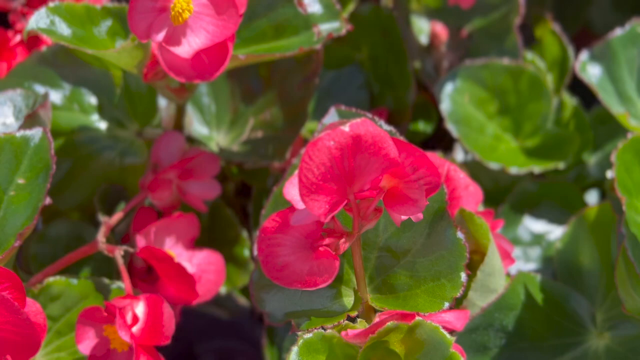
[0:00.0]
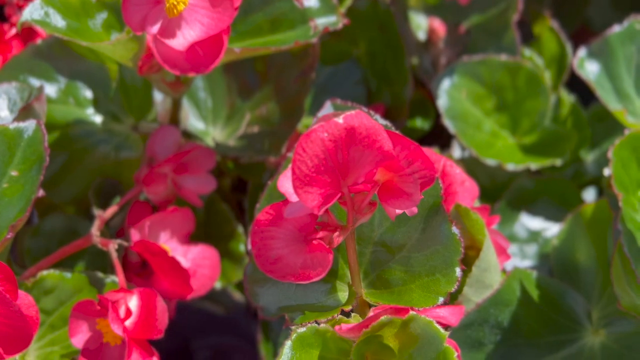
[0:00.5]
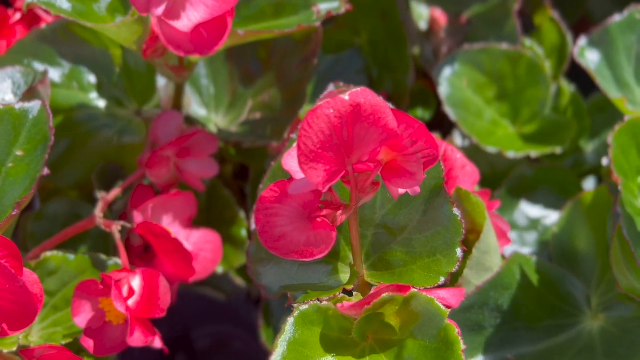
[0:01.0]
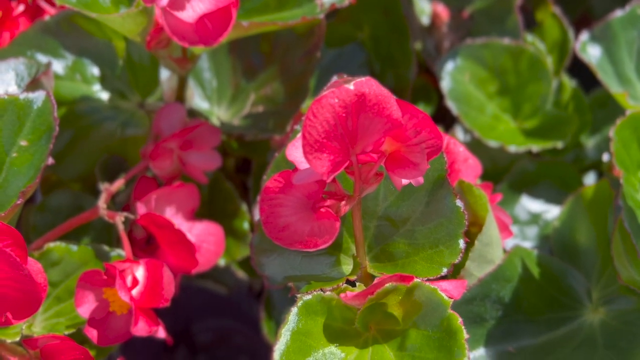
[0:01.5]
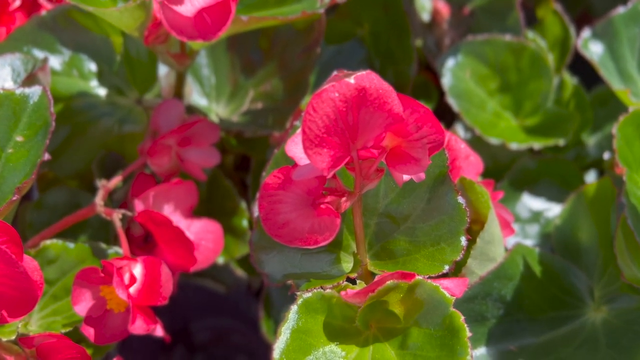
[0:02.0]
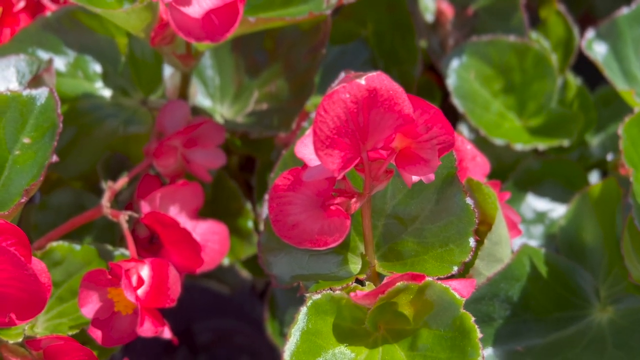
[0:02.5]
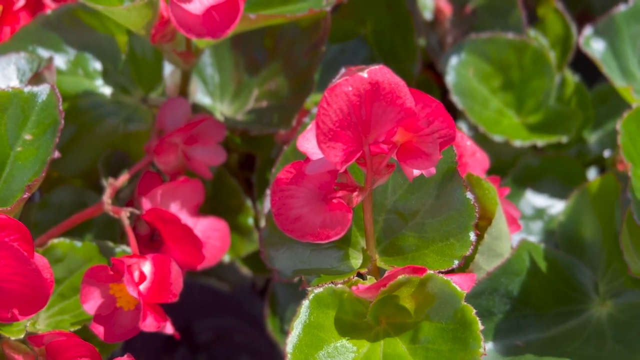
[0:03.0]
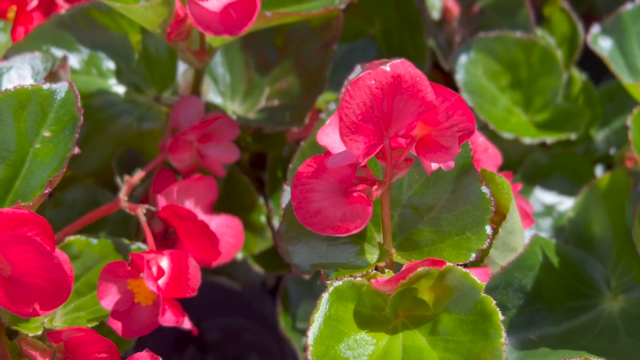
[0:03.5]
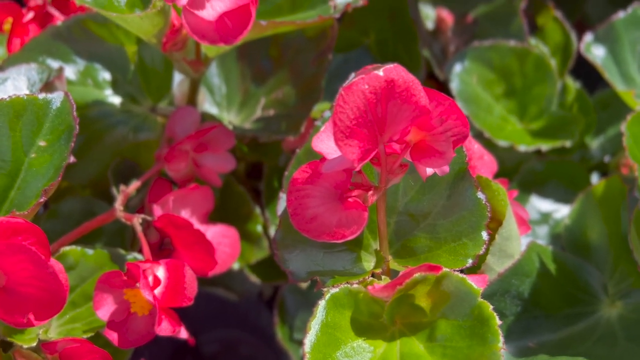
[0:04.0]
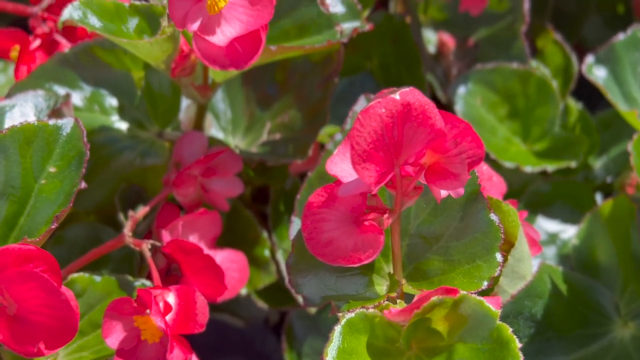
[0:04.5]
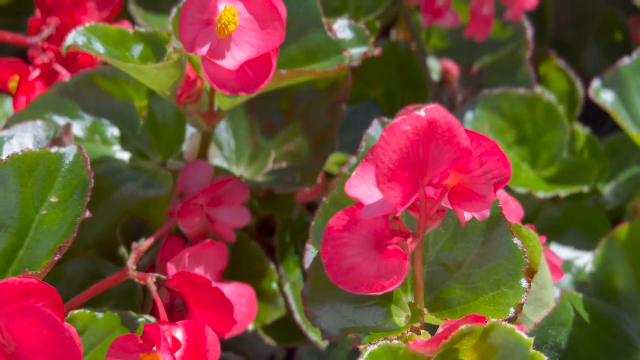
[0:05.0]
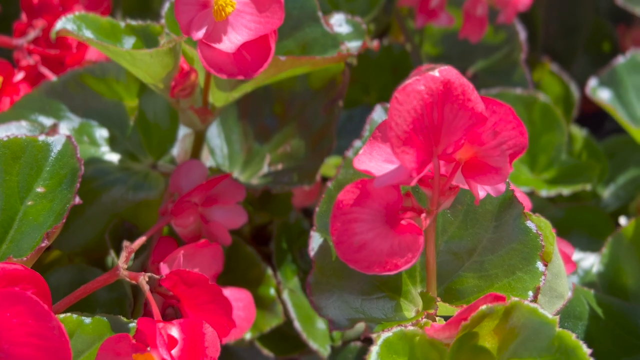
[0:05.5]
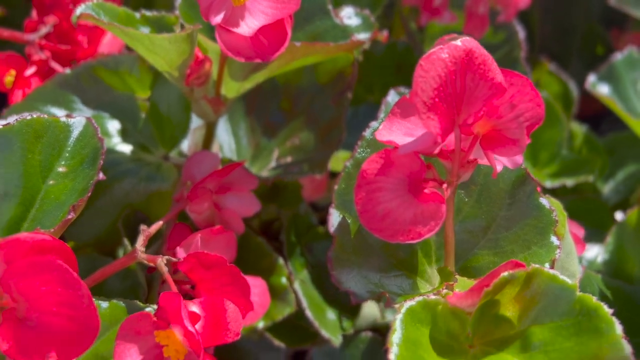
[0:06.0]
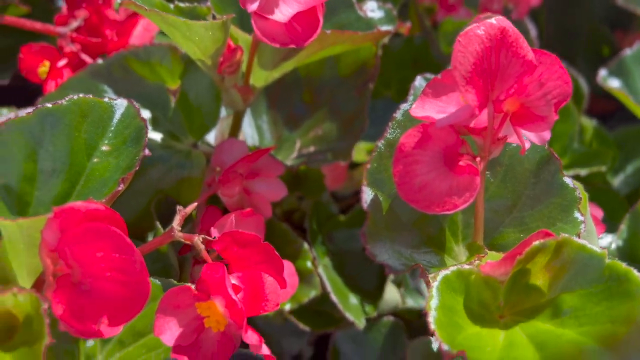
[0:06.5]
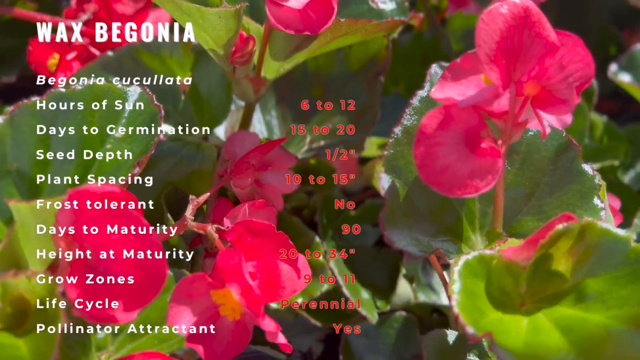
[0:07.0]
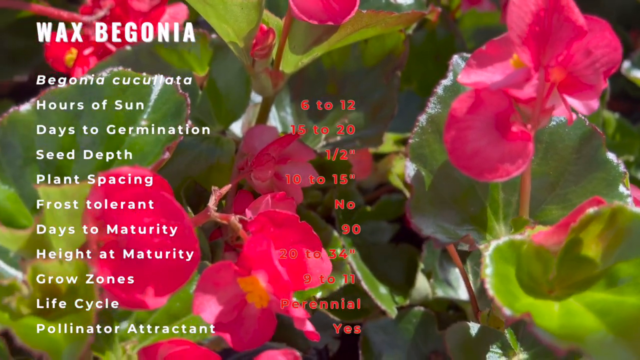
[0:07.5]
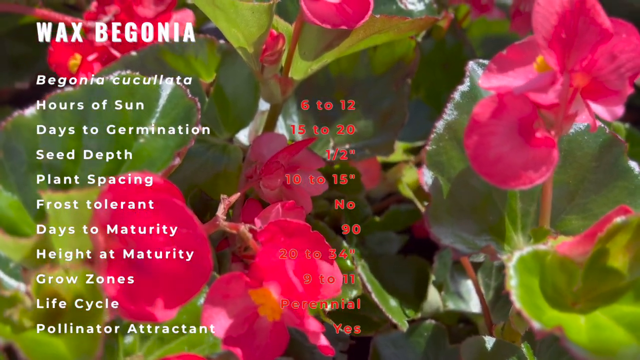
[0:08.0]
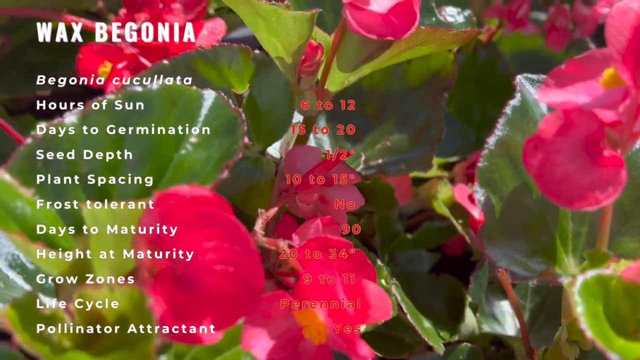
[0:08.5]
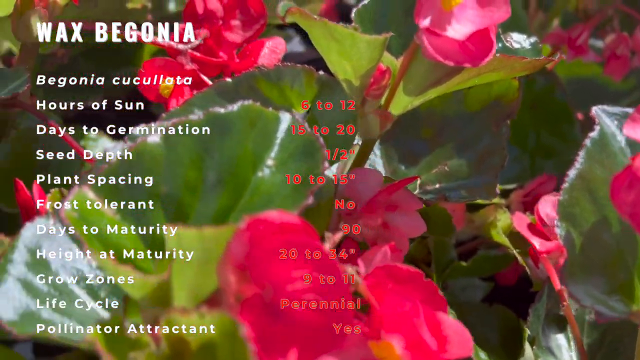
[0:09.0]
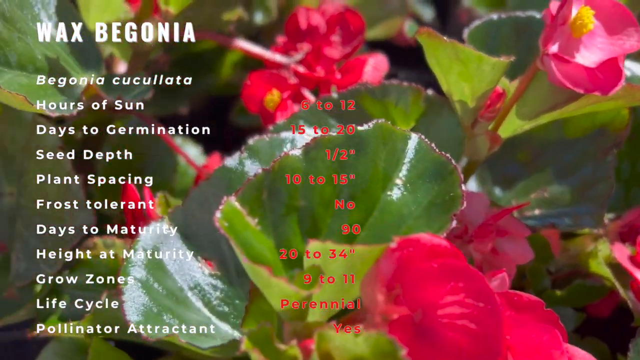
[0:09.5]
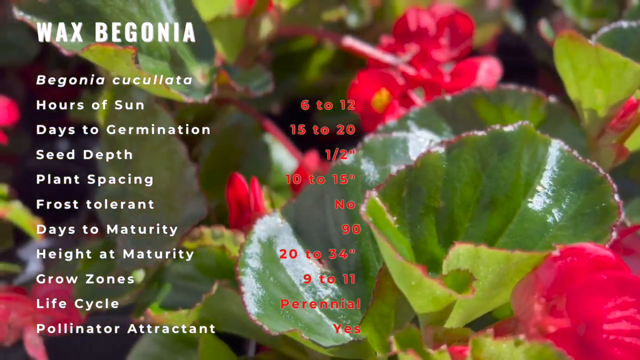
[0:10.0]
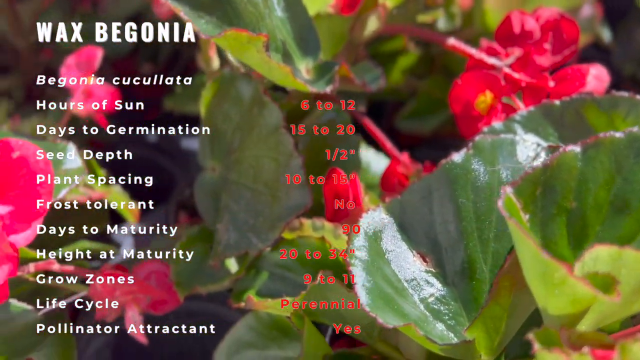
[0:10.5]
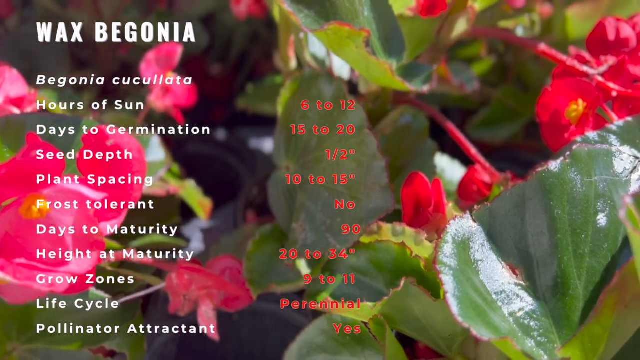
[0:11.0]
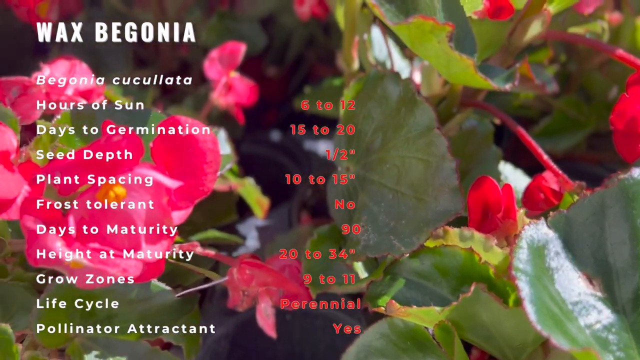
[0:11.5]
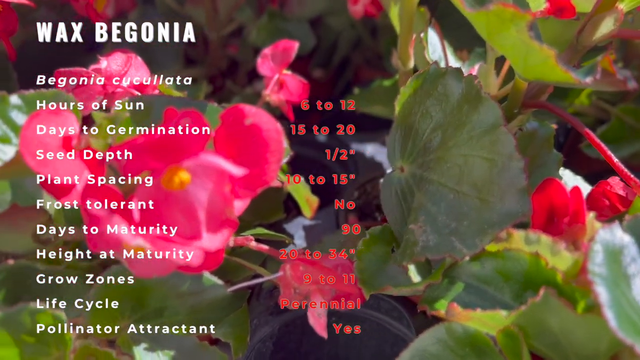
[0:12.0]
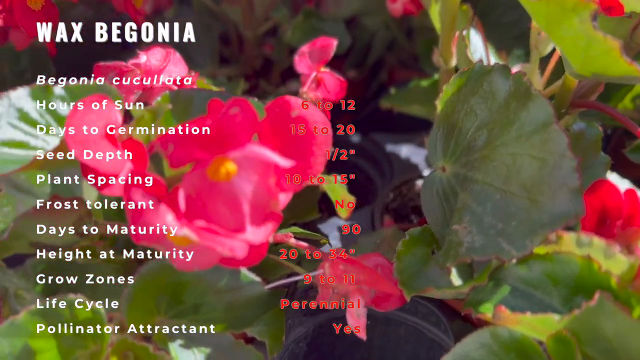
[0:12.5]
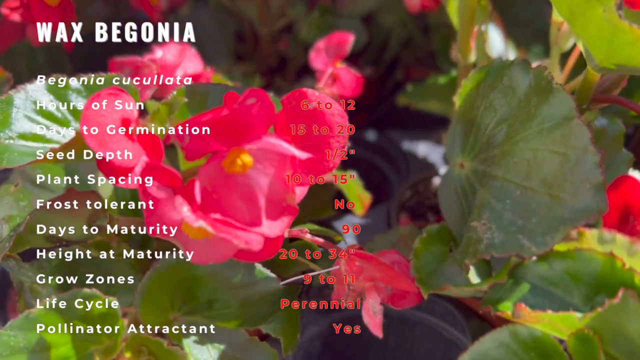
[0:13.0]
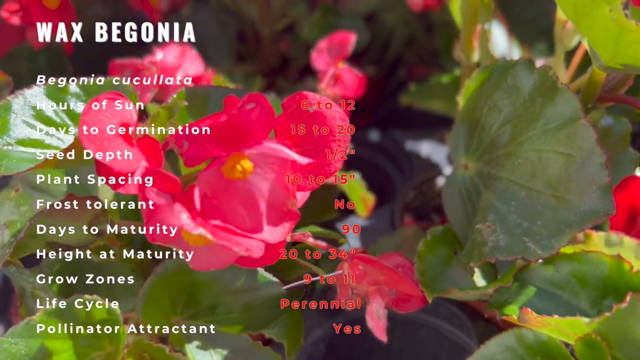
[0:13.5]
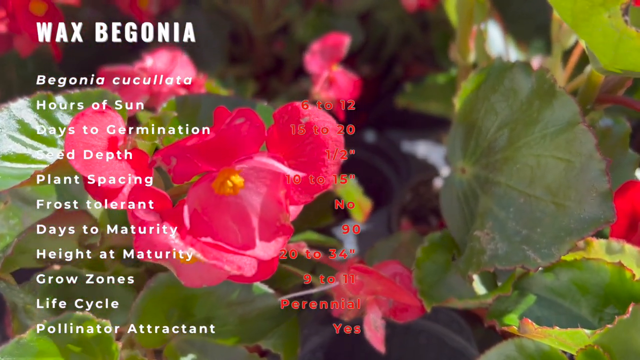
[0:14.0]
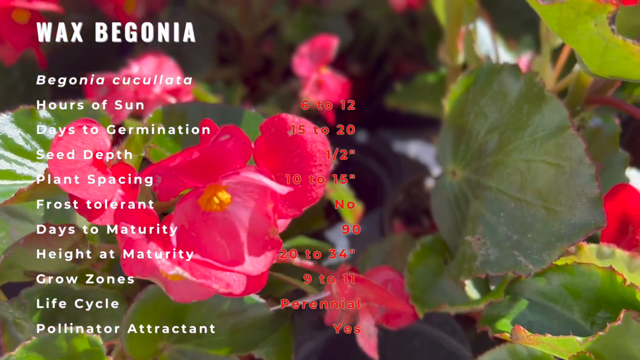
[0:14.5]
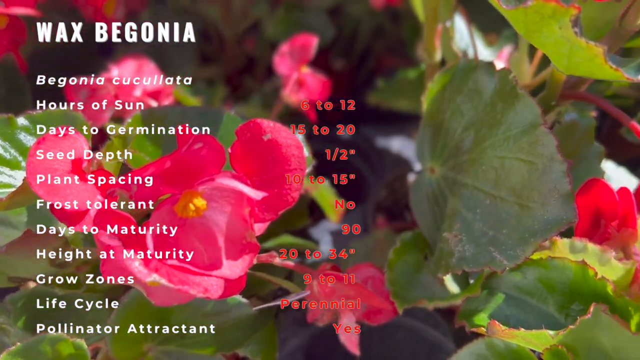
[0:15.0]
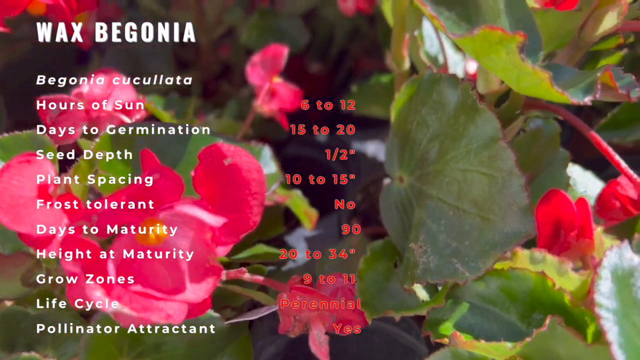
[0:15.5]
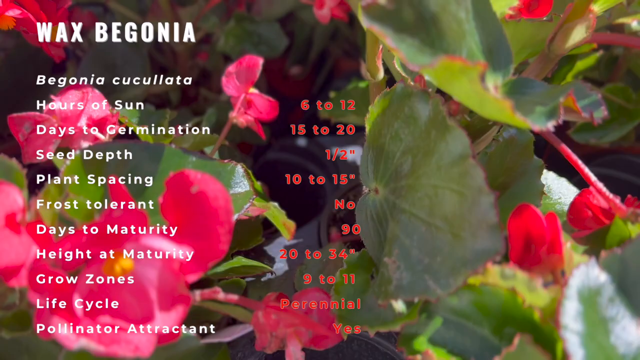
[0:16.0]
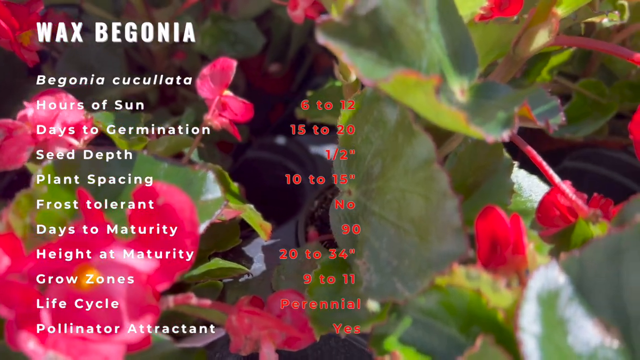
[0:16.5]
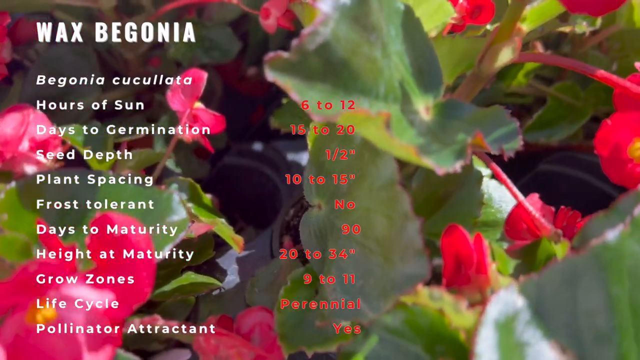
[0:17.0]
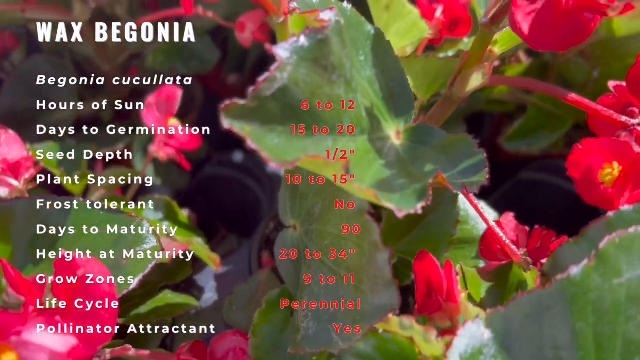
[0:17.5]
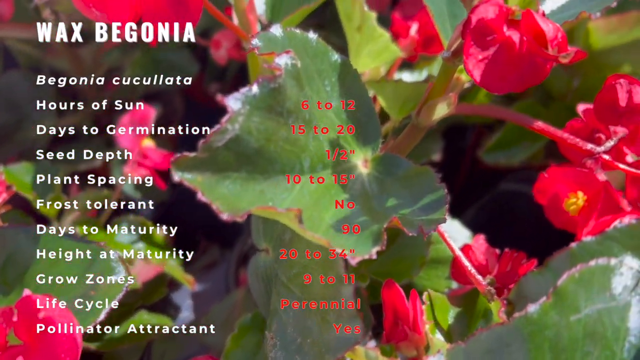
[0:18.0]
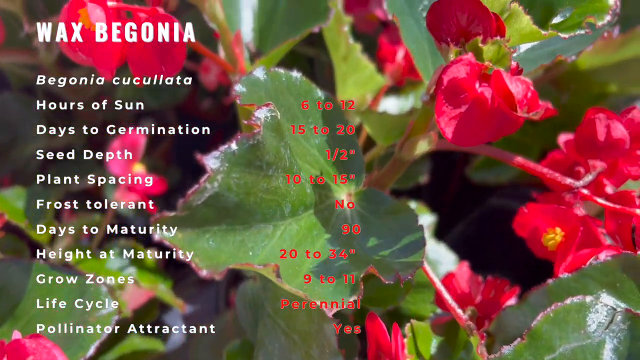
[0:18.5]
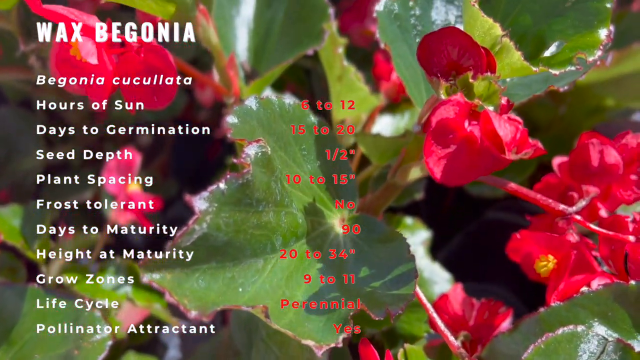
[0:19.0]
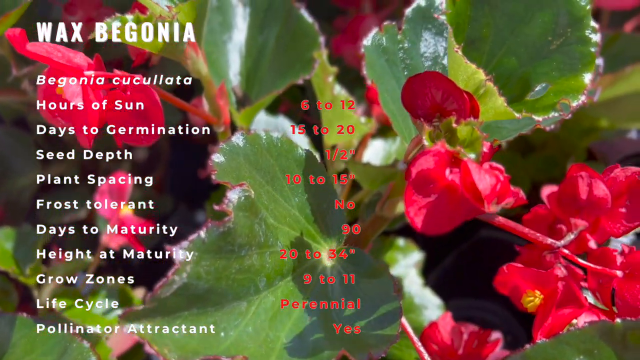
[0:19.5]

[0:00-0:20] A zoomed-in view shows what looks like some kind of plant, with the camera moving around it. There are multiple bright green leaves, some with a little of the natural purply brown color around the edges. The flowers are bright pink, with multiple petals coming up from a single stem of the same color, and leaves all around, somewhat like a bush of some kind. In the middle of each flower is what is apparently the stamen, an almost yellow ball shape. The camera keeps moving around this section. The scene is outdoors, with sunlight dappling over the flowers and the leaves.